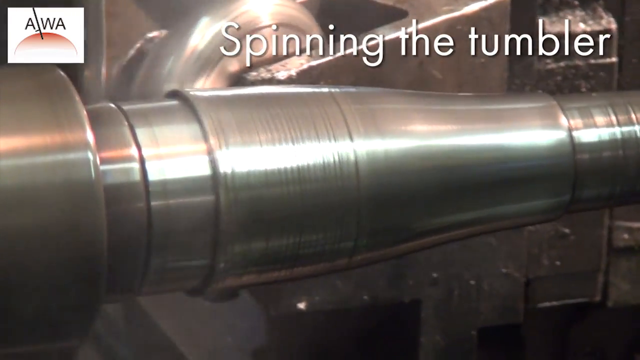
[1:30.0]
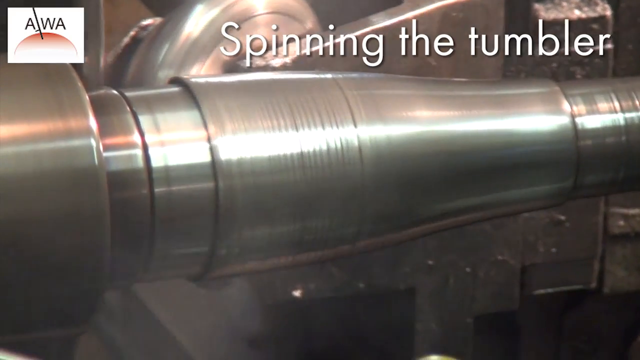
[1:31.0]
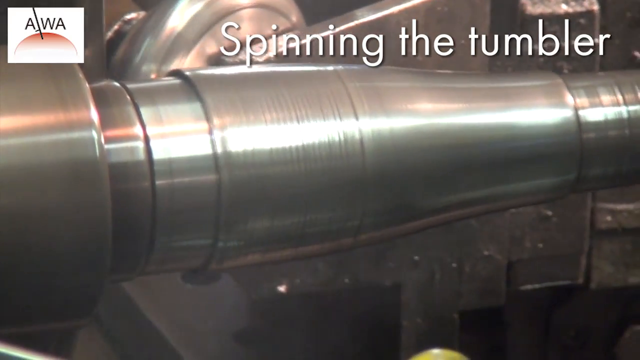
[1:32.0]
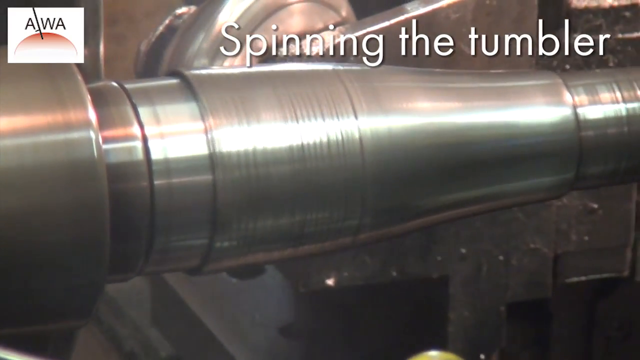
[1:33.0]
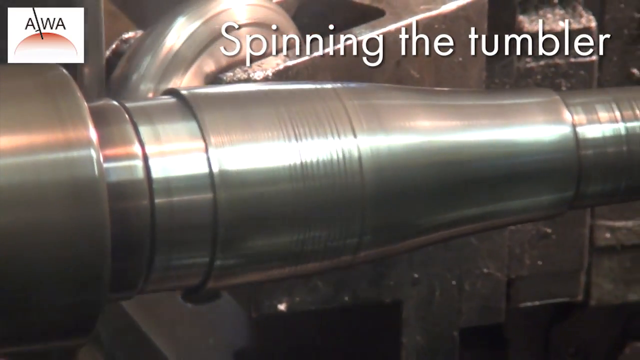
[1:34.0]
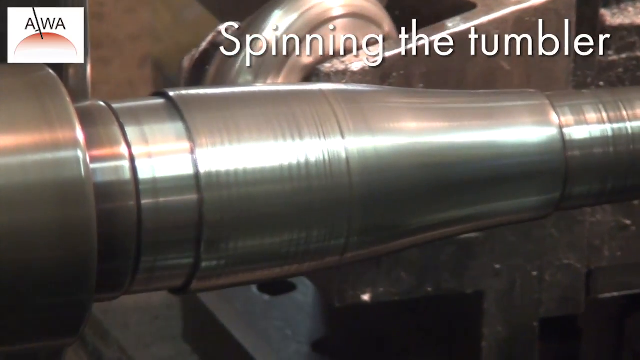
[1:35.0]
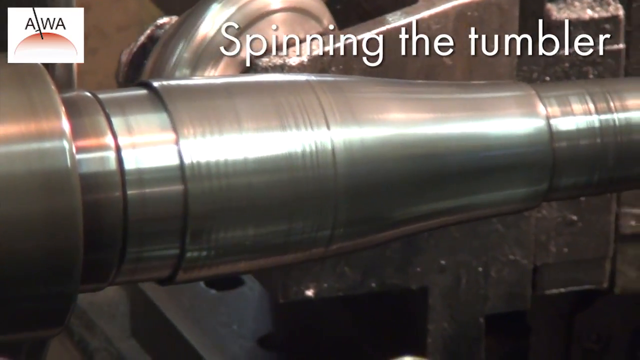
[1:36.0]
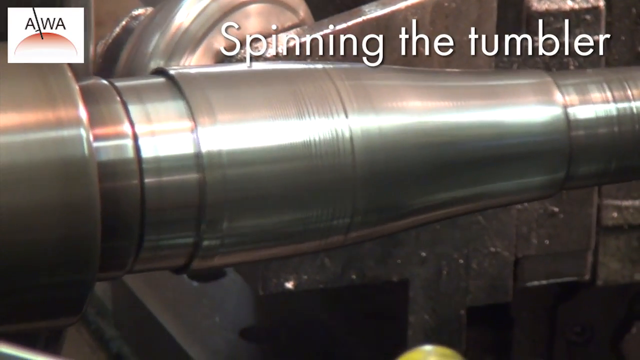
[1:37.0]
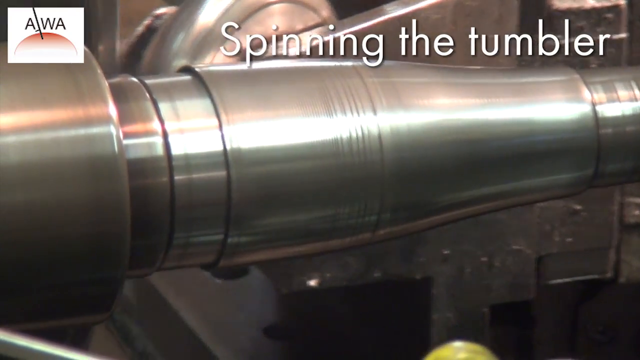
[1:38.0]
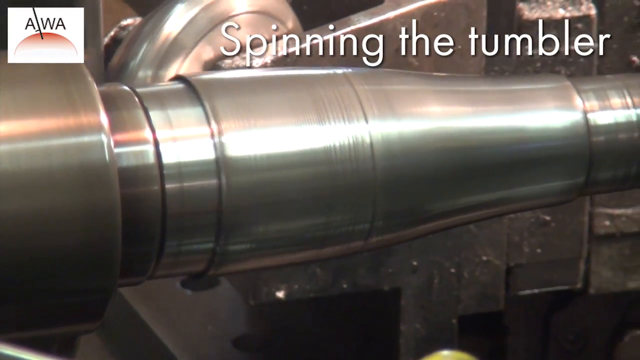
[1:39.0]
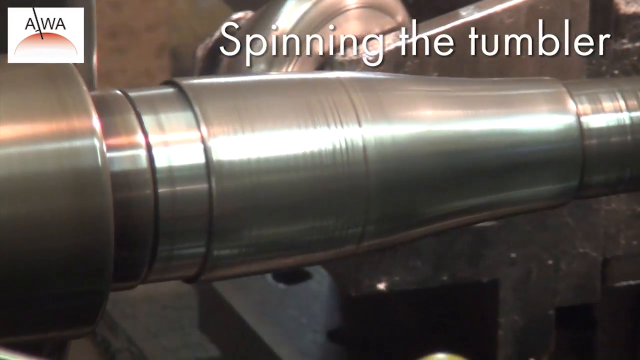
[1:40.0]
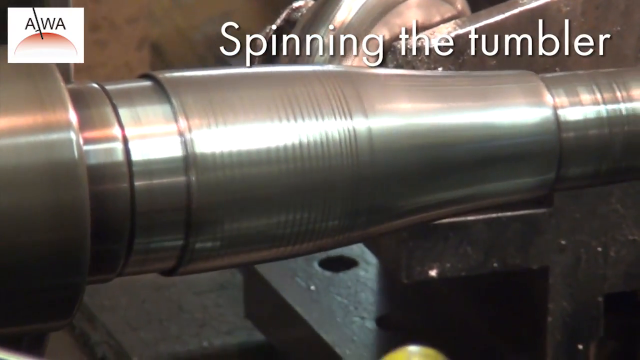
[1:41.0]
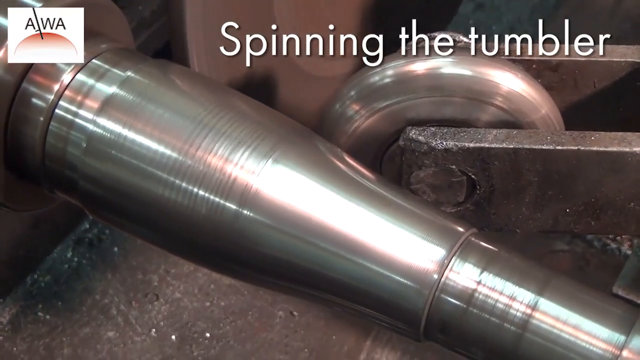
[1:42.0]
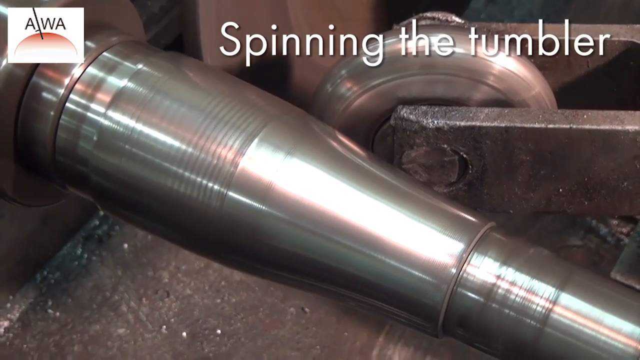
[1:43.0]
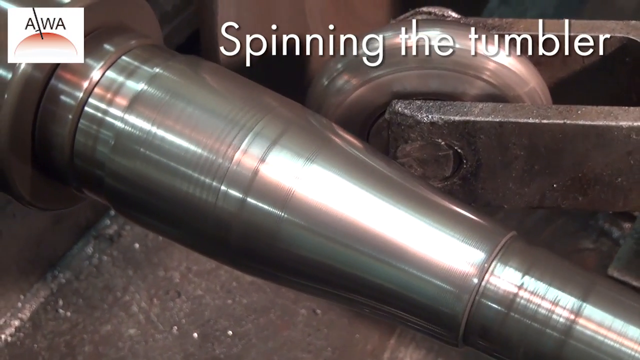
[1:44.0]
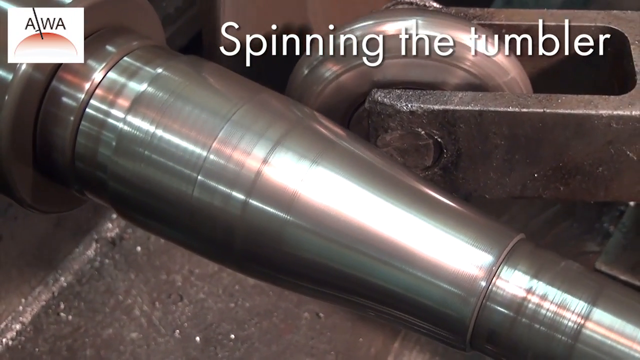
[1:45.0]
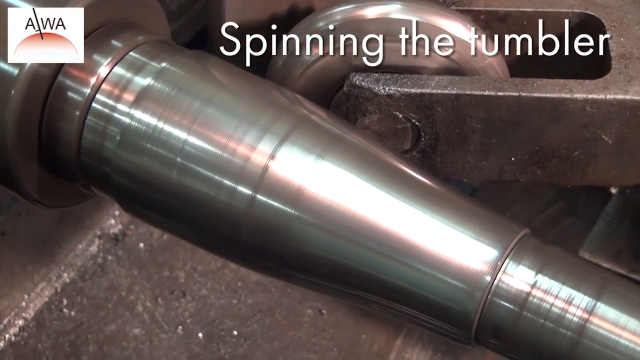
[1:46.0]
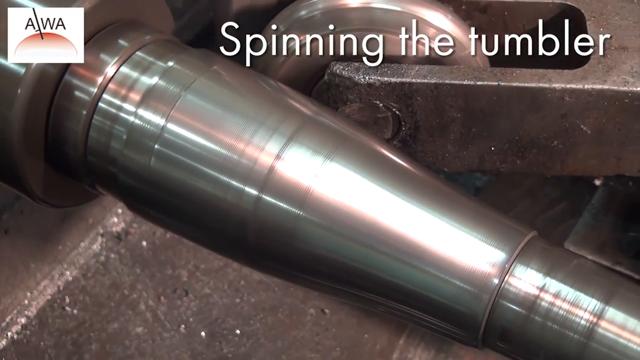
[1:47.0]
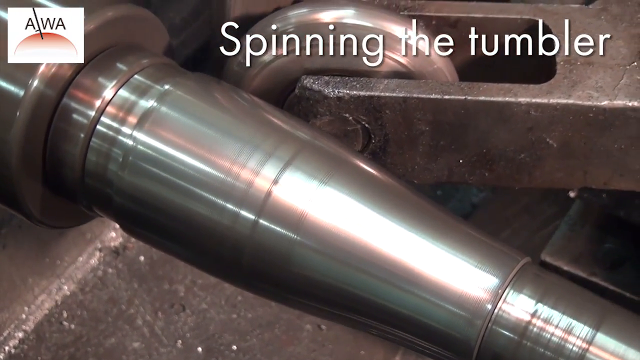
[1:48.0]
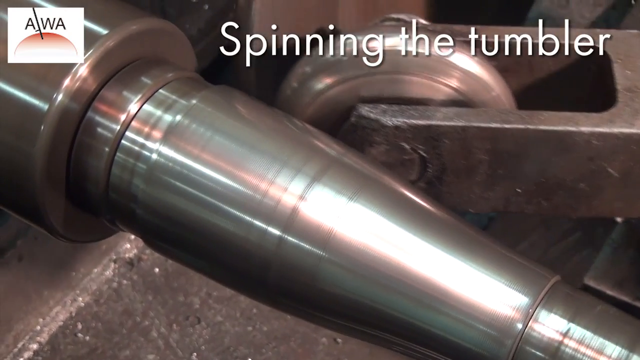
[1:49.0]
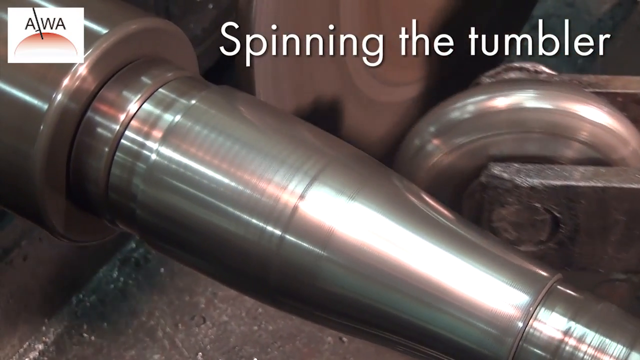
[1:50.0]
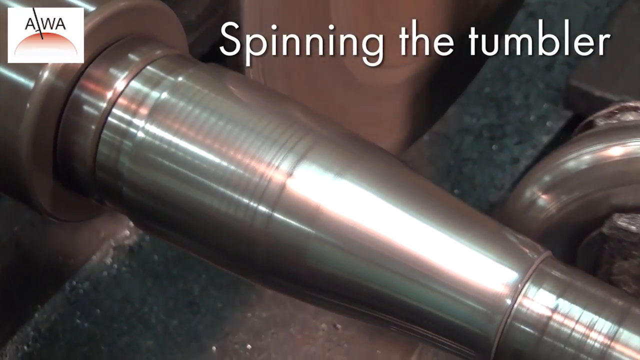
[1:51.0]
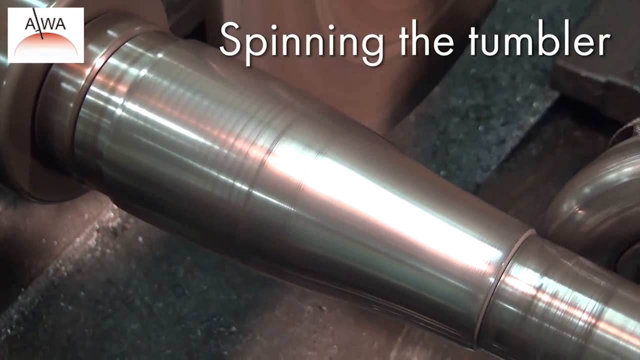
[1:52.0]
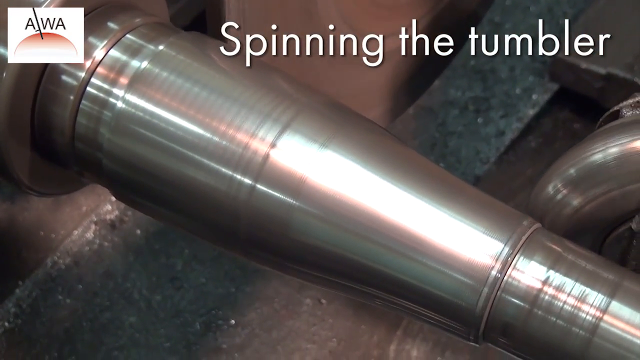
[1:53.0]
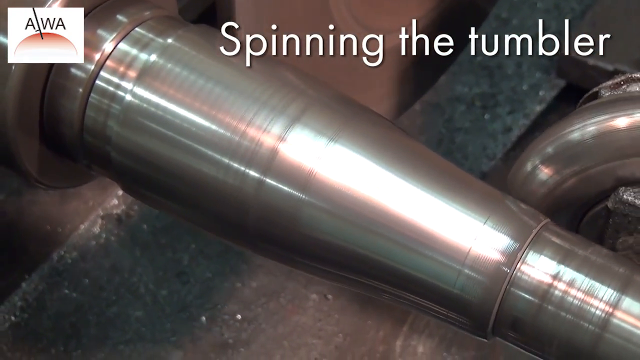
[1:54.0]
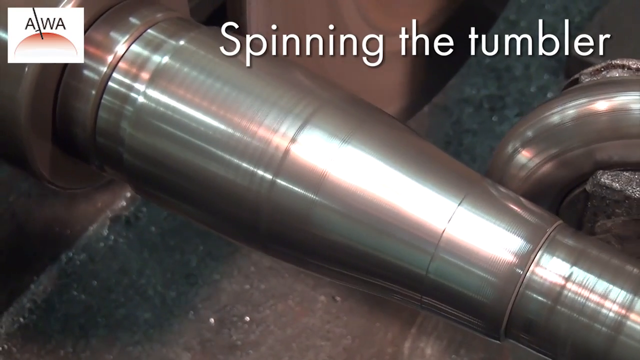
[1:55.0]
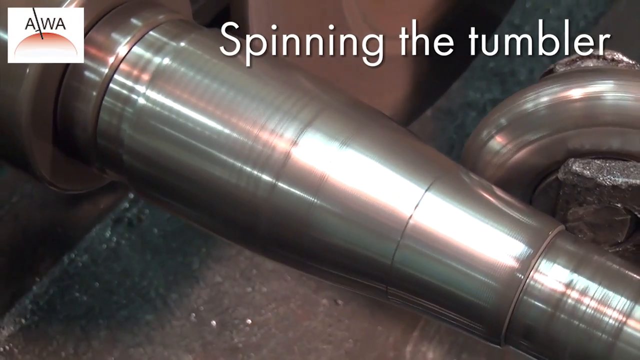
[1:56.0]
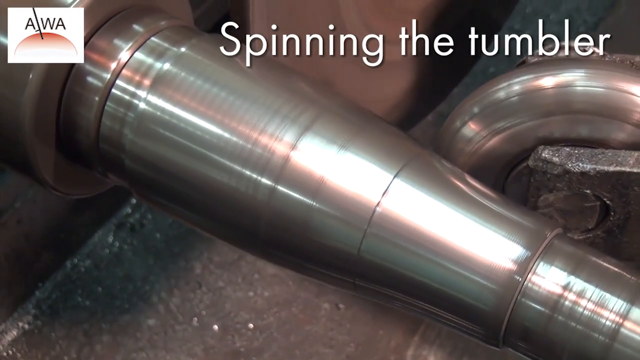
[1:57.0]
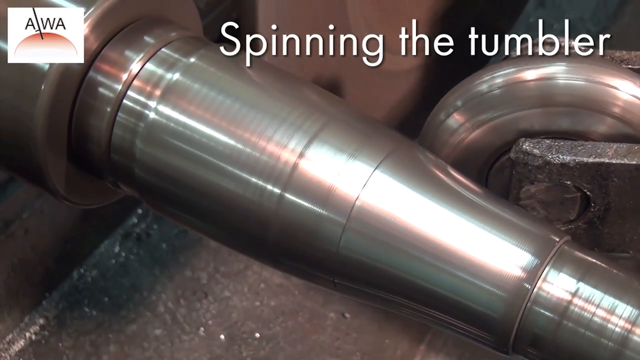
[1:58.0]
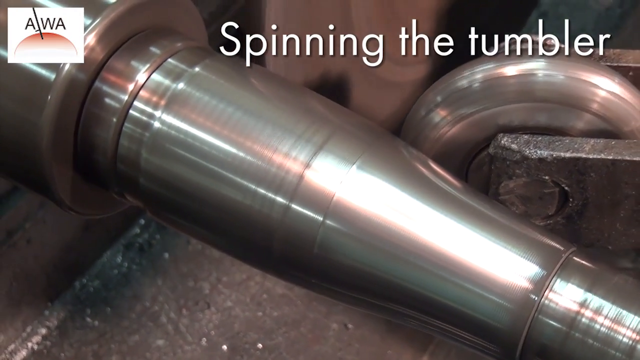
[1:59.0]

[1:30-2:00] Machinery adjusts the size of what looks kind of like a tumbler, or maybe a silver vase. A close-up shows a thick disc rubbing against the side of the tumbler, which spins continuously while attached to two poles. The disc moves back and forth, and every time it touches the tumbler the metal ripples upward; it moves slowly upward, apparently stretching out the metal piece. The equipment in the background is dark, rusty and kind of old, and the equipment underneath also looks dark, rusty, old and grainy, while the tumbler is very bright and shiny, reflecting the light as a white patch on its side. A strip of red light is visible too, with red and white reflected in the tumbler and on the disc, and the edge of the disc reflects the light as well. Lighter steam comes from the bottom of the screen. The machinery looks rough and old. The text "spinning the tumbler" appears in white in the top right corner of the screen.